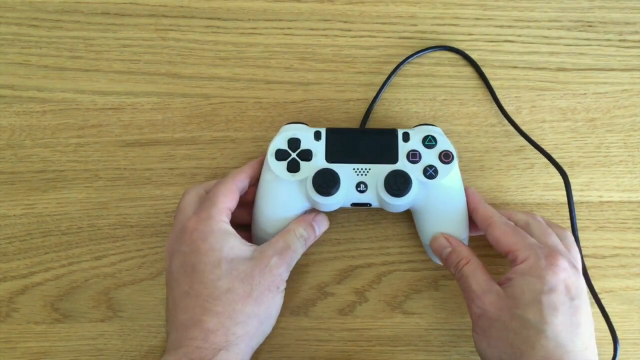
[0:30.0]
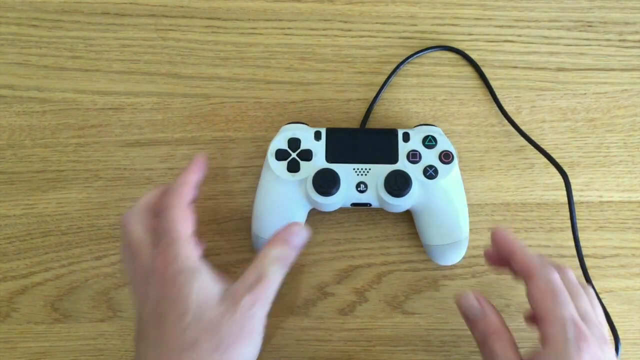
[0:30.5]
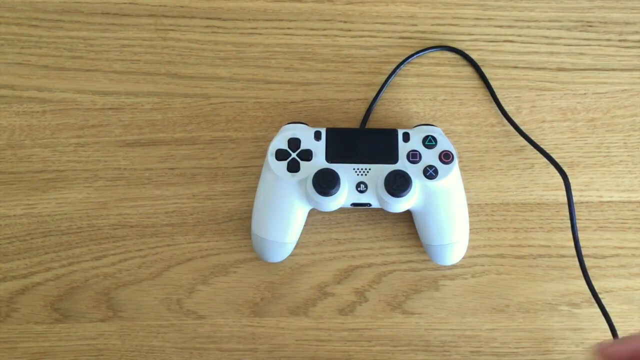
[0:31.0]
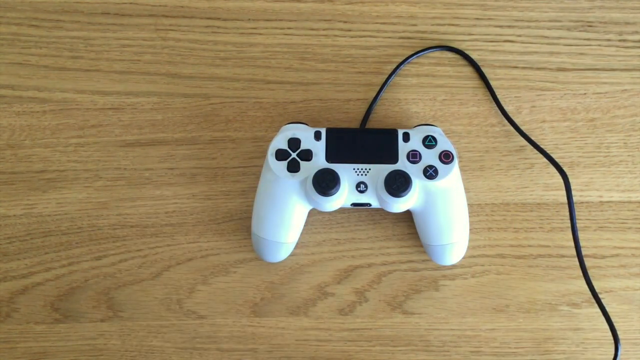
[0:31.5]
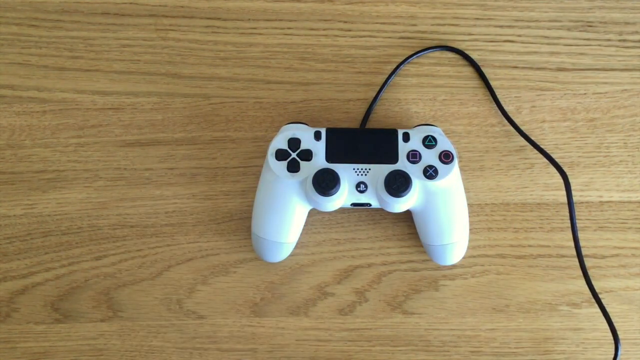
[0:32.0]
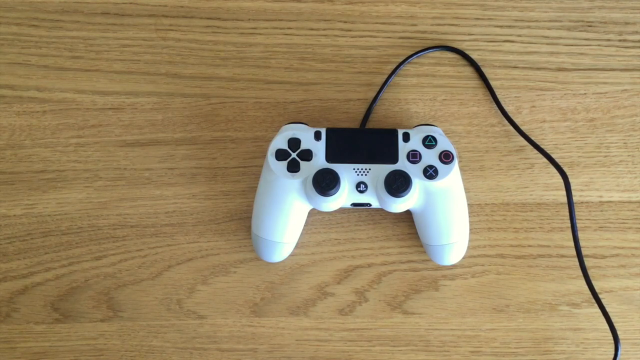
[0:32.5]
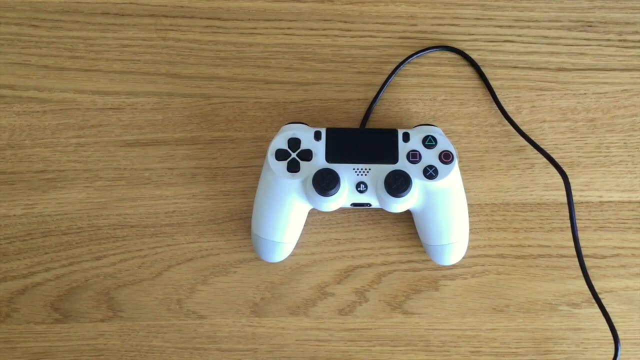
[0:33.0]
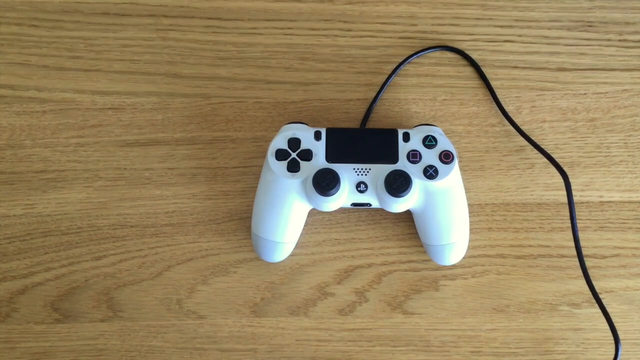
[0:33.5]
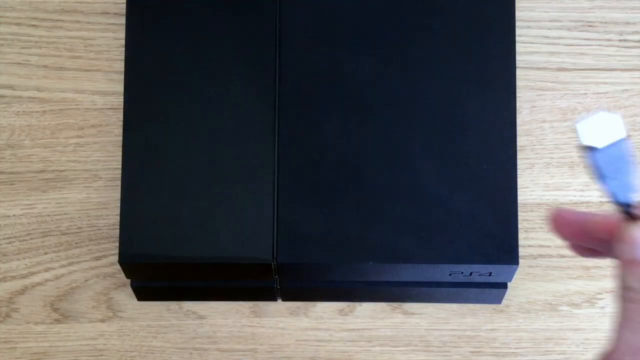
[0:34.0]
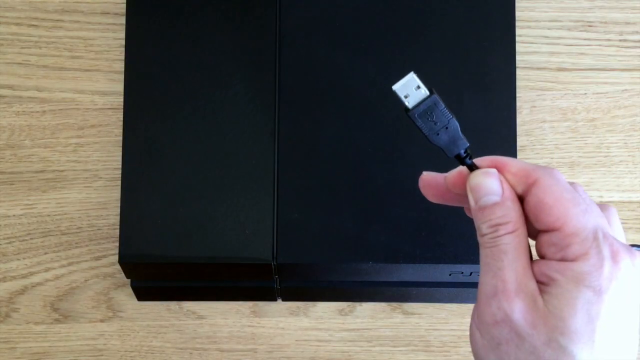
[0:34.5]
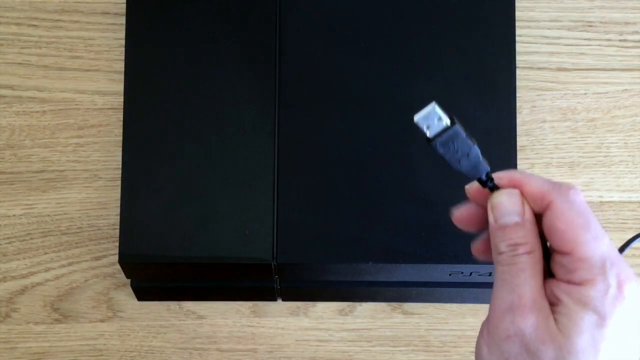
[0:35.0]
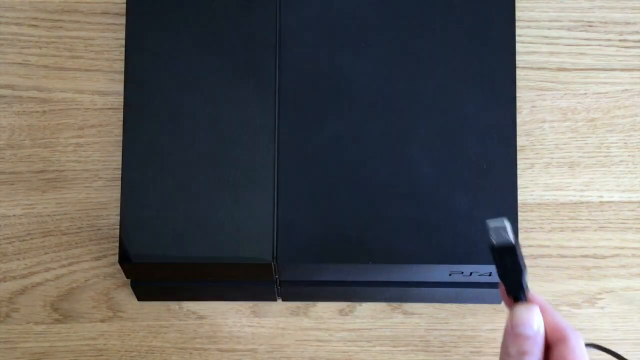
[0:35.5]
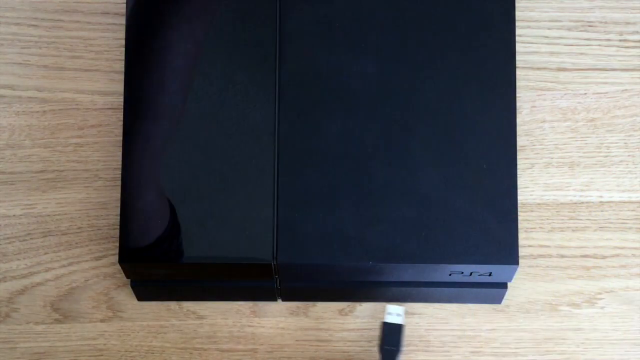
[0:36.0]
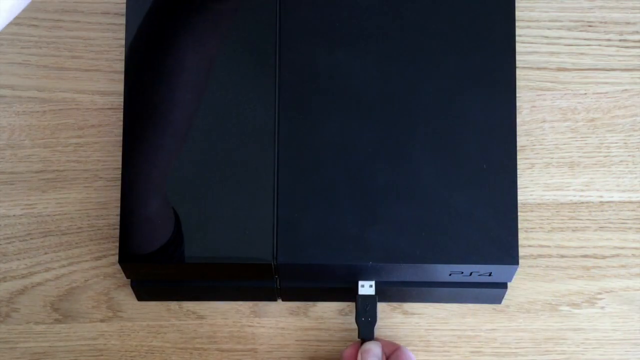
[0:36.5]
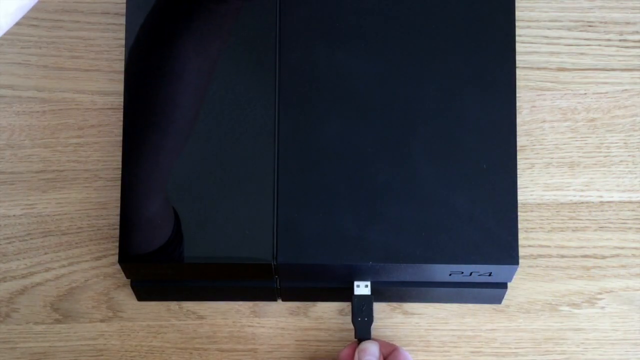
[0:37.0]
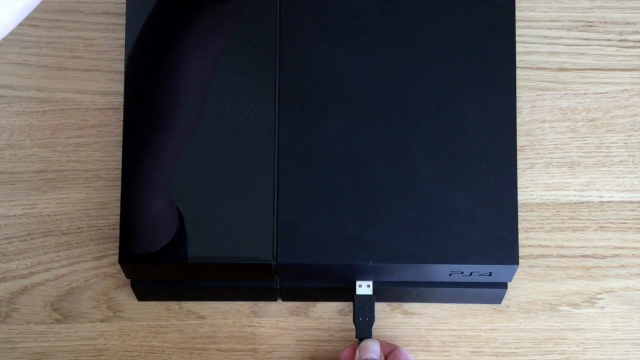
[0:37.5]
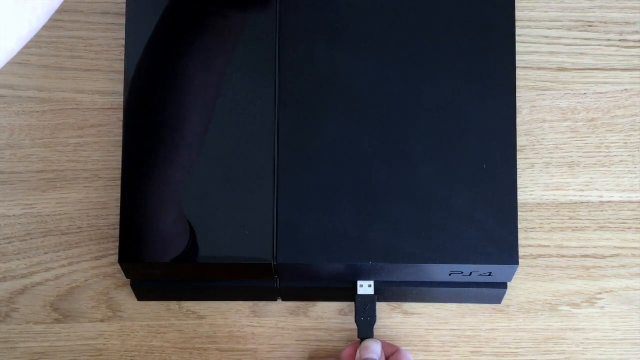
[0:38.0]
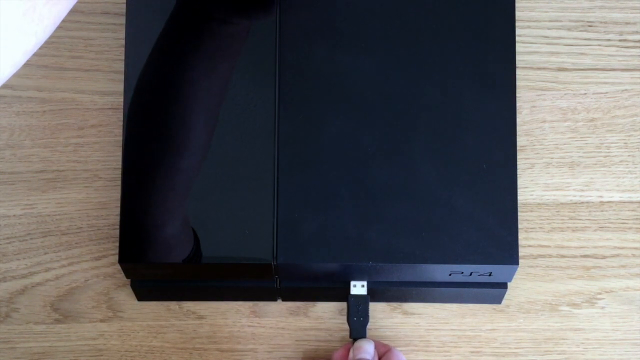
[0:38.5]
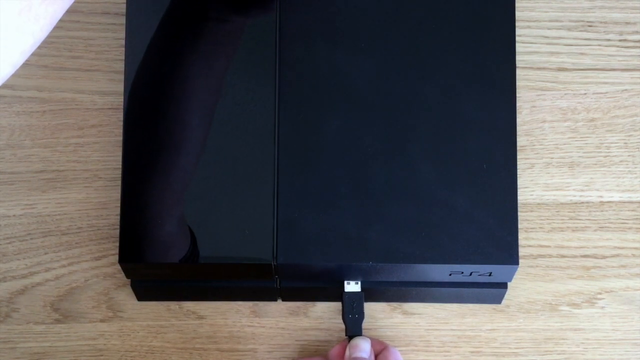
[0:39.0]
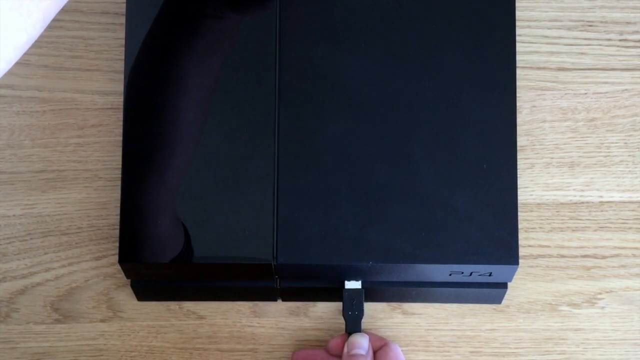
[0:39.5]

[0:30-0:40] The individual places the controller back and removes their hands, which appear to have a white skin tone with reddish markings. The screen then changes completely to show the PlayStation, which appears to be a completely black square. A USB cord is connected; it is similar to the one shown earlier, but this one has a longer silver cap tip. As it is connected, a logo at the far bottom right shows that this is a PlayStation 4. The PlayStation 4 remains on the wooden table while the individual moves the wire slightly from left to right, trying to connect it.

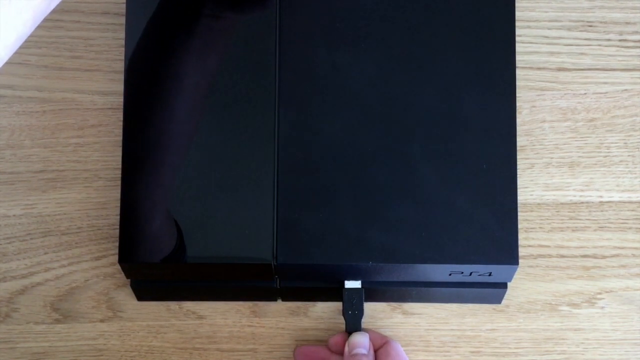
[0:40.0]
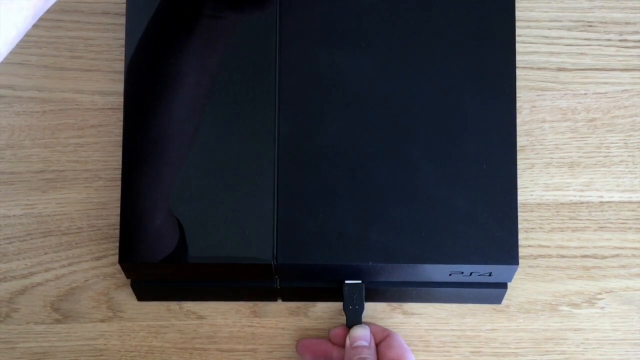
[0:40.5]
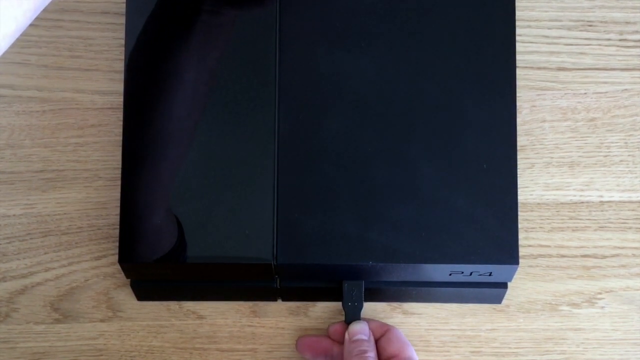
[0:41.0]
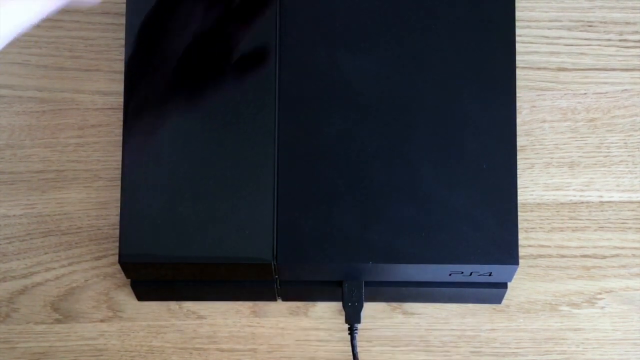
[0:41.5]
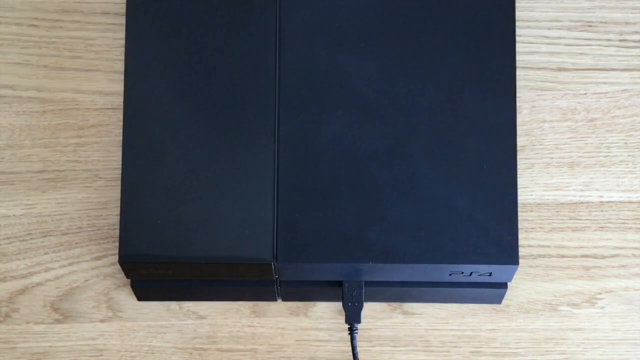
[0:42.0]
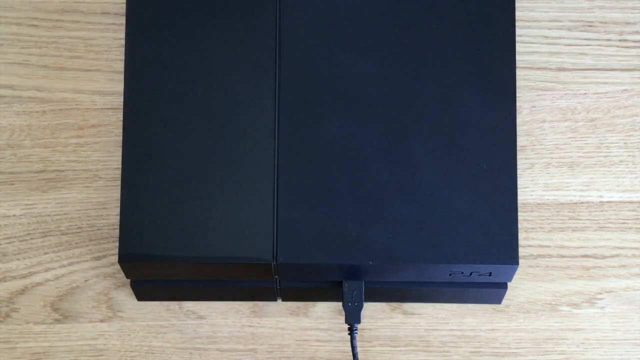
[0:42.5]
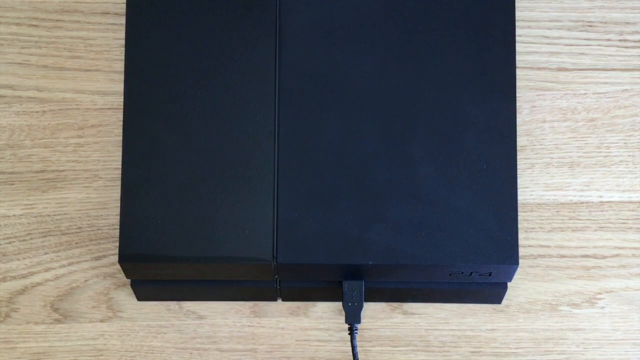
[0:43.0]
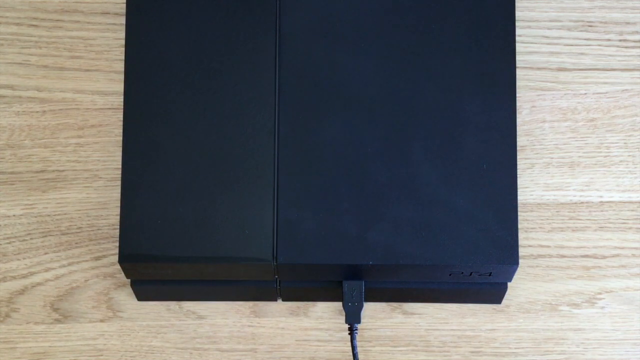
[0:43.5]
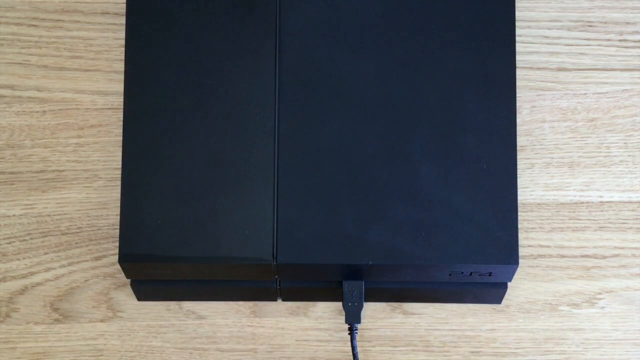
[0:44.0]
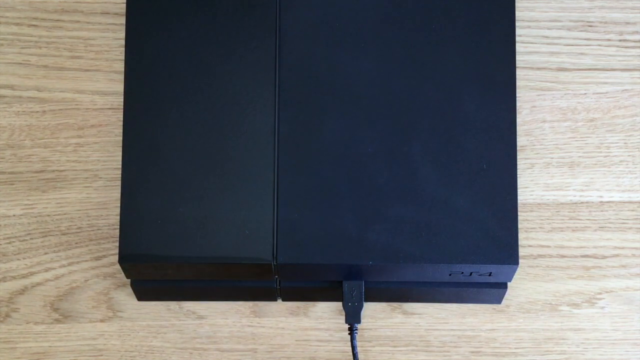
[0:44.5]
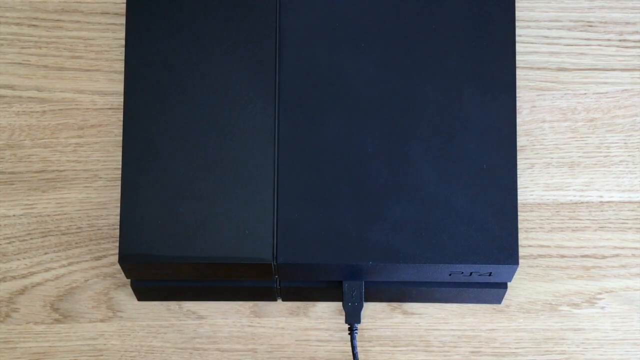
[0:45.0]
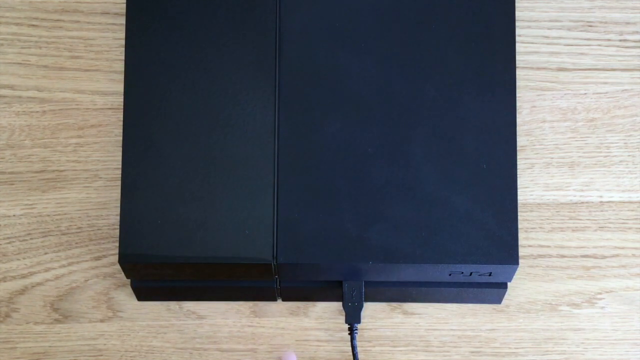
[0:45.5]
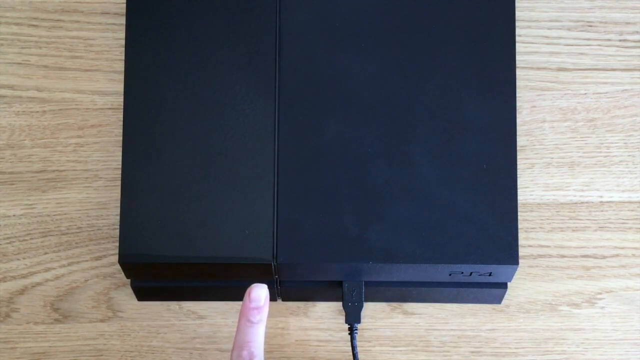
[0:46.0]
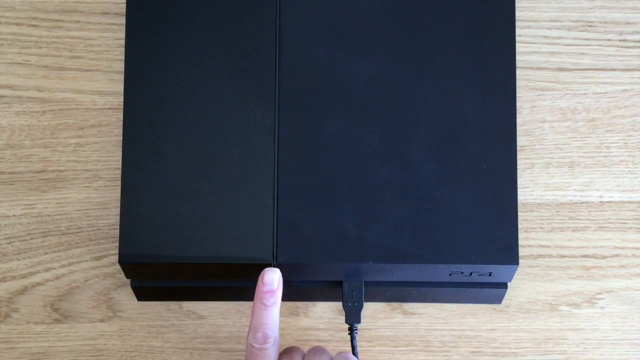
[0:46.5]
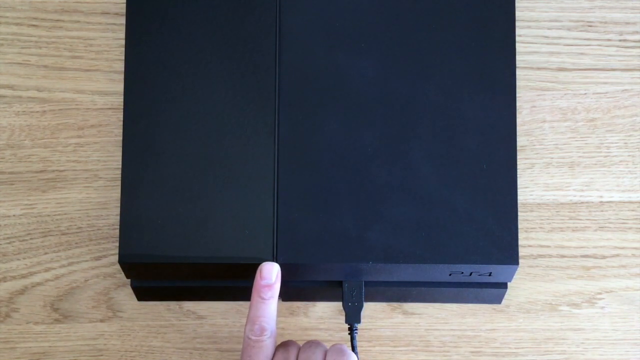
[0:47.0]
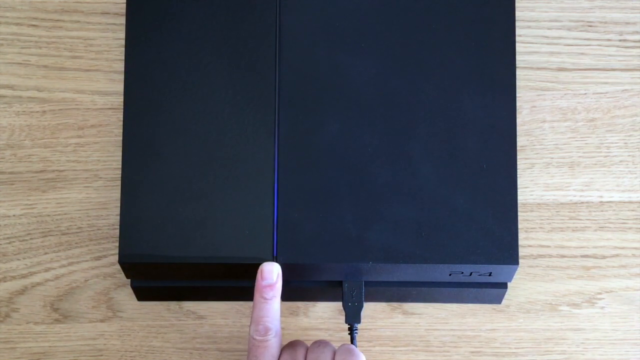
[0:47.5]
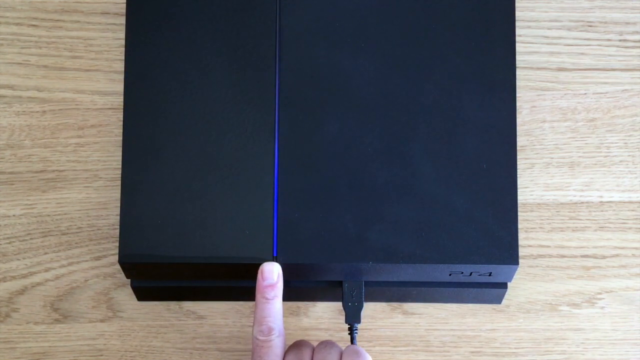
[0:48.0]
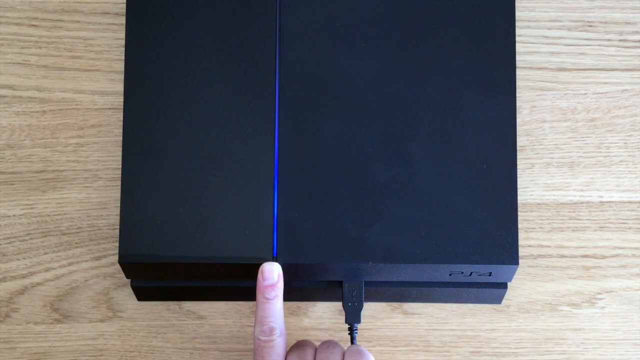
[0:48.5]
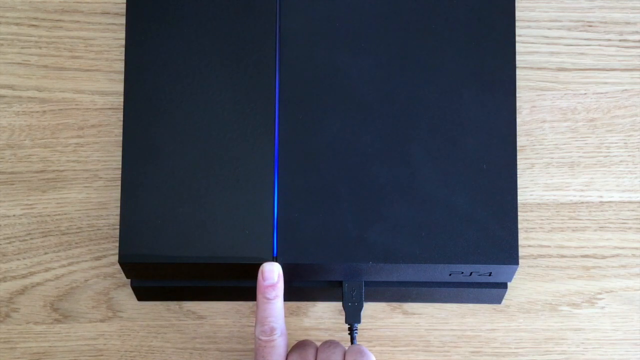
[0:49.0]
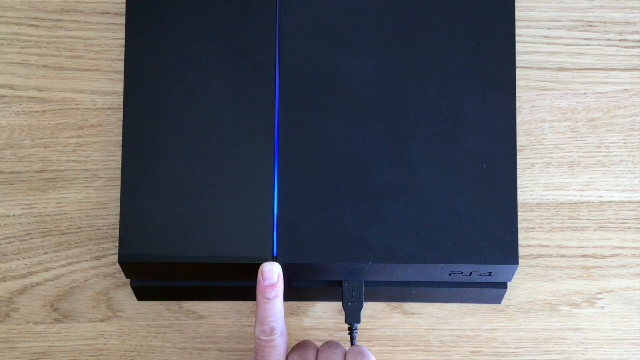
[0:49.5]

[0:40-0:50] The individual struggles to place the wire, toward the right center. They use their left hand to stabilize their grip, and once the wire is connected, they remove both hands from the PlayStation 4. The silhouette of a shadow from the person's body is still visible, and the sheen on the PlayStation 4 gets darker. What appears to be an index finger then points toward the center of a split, and the PlayStation turns on, lighting up with a very deep blue light.